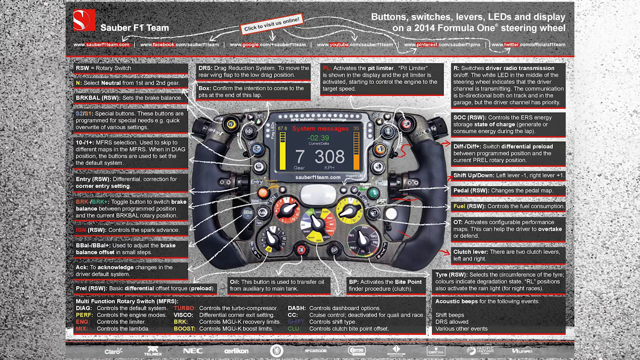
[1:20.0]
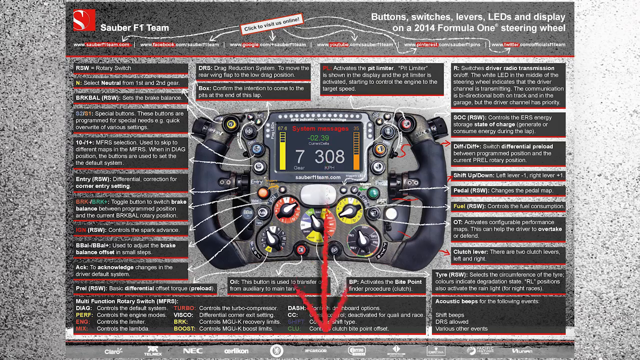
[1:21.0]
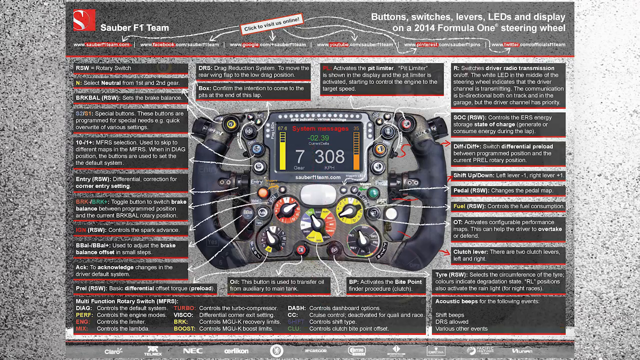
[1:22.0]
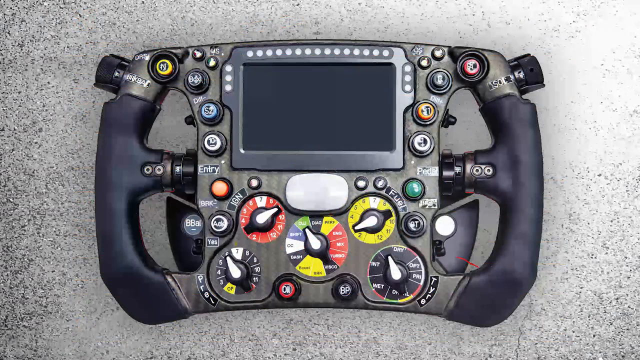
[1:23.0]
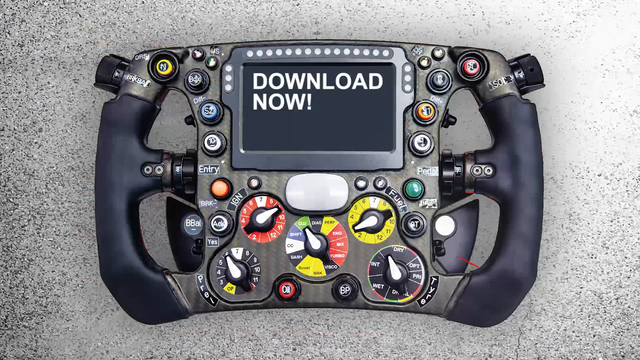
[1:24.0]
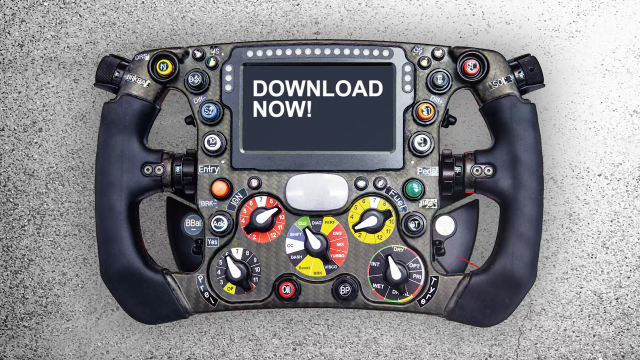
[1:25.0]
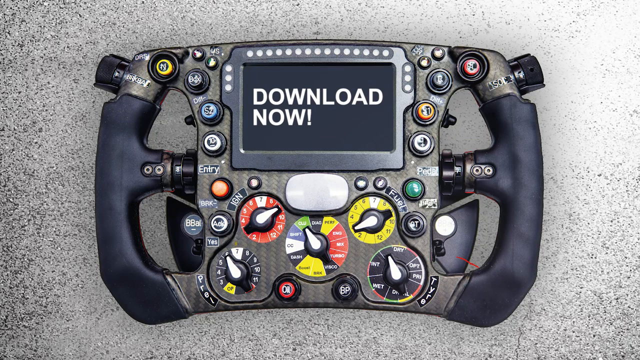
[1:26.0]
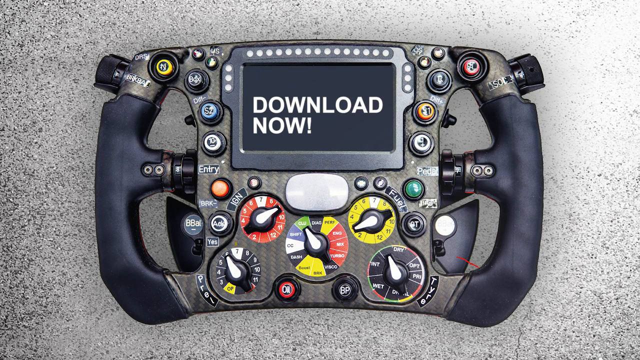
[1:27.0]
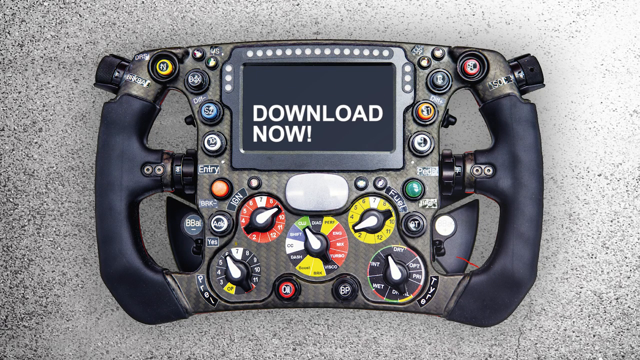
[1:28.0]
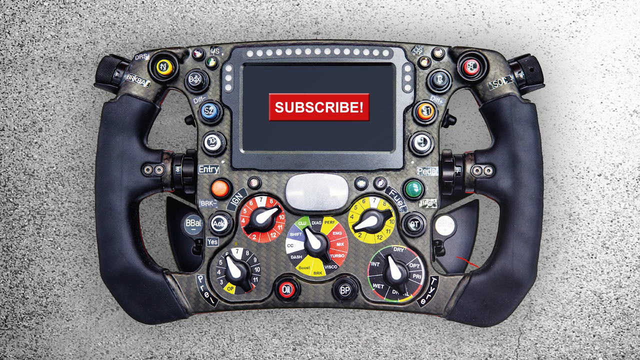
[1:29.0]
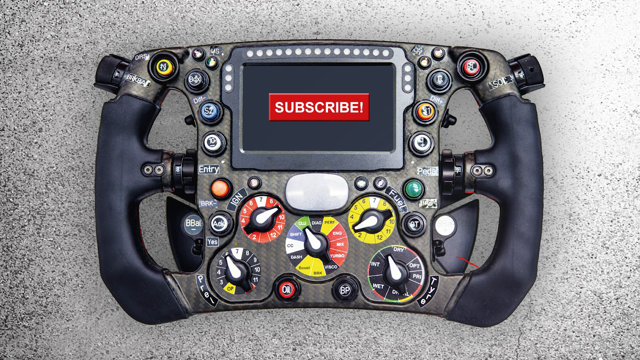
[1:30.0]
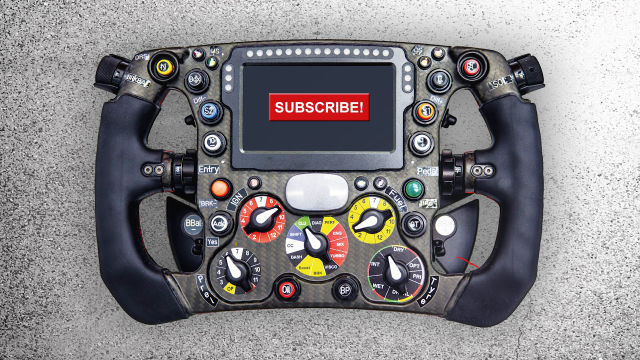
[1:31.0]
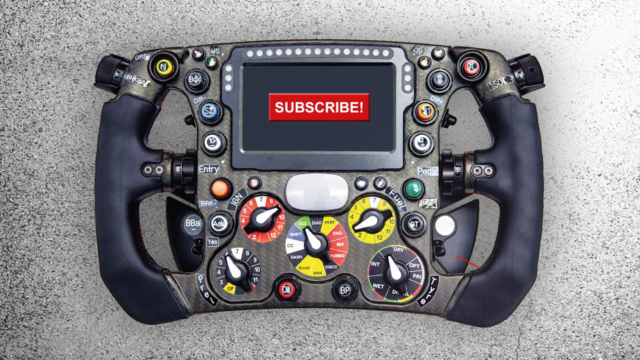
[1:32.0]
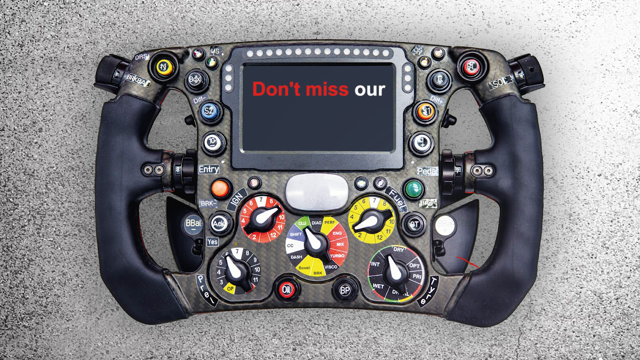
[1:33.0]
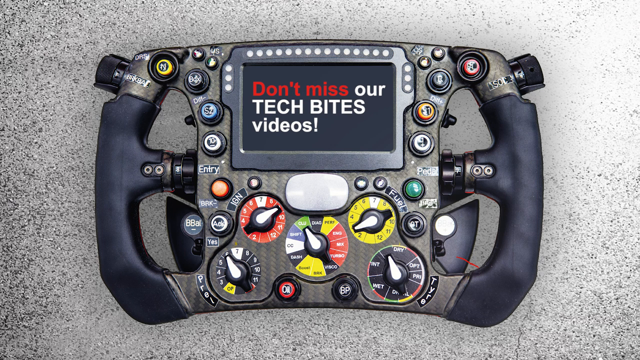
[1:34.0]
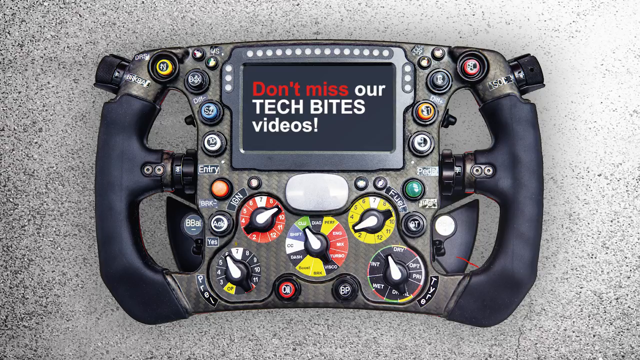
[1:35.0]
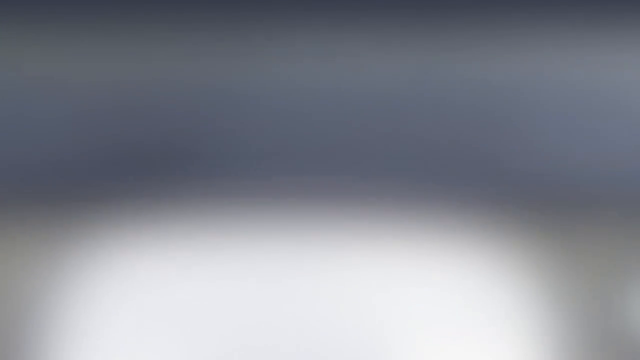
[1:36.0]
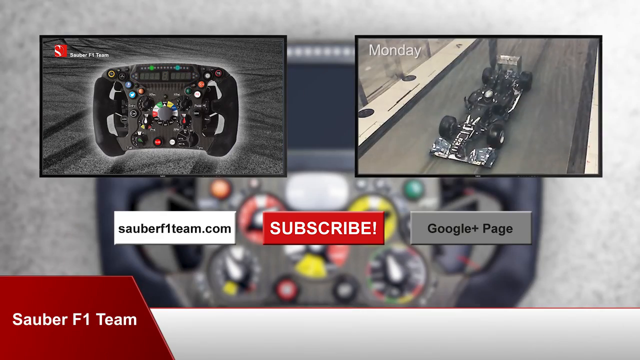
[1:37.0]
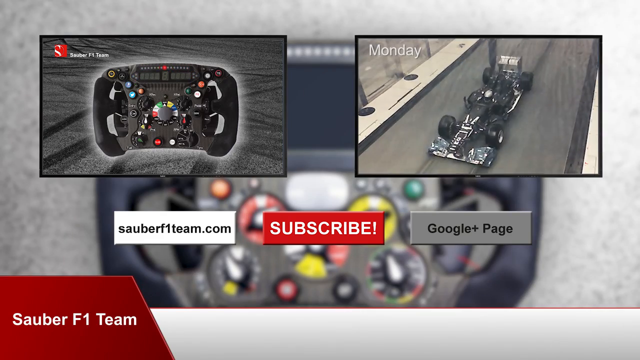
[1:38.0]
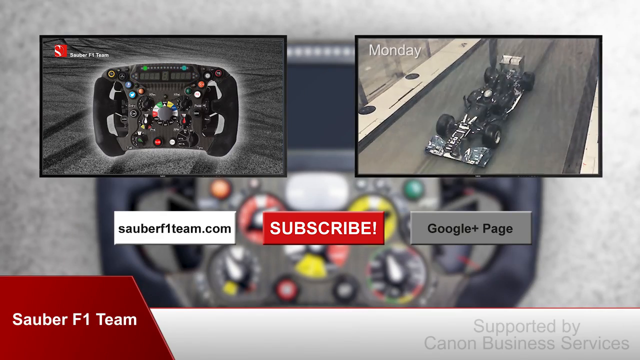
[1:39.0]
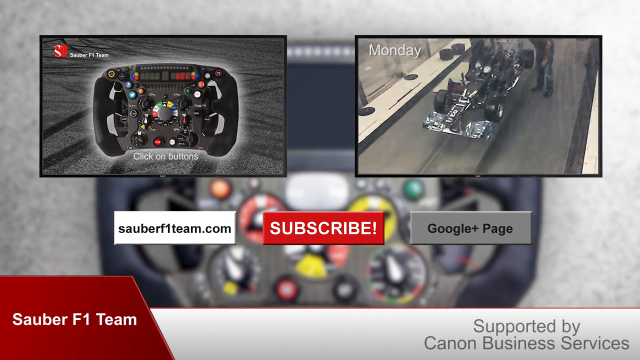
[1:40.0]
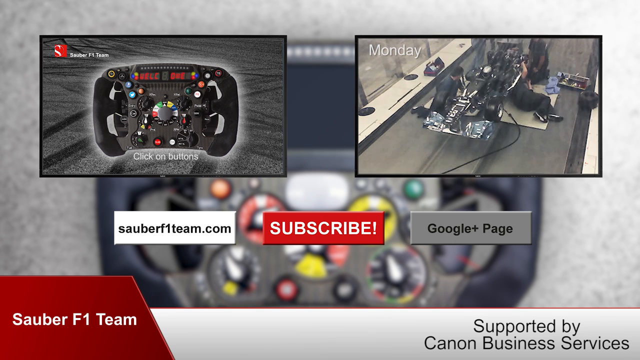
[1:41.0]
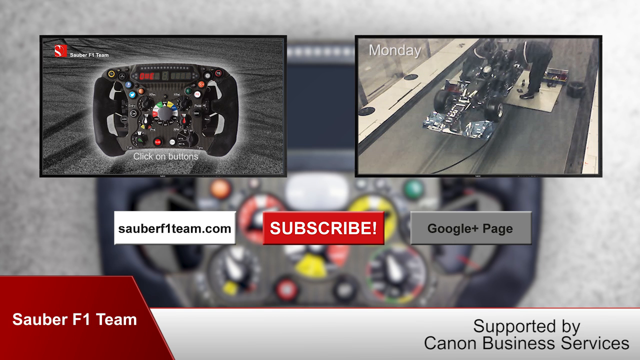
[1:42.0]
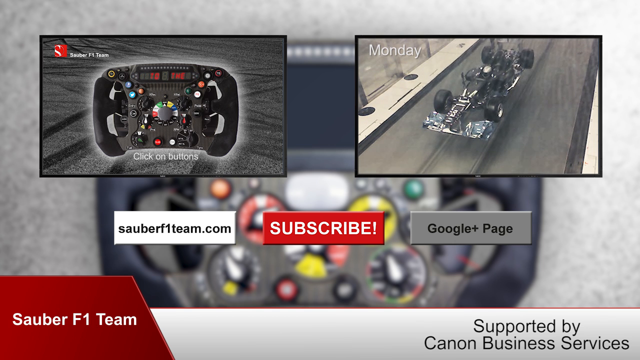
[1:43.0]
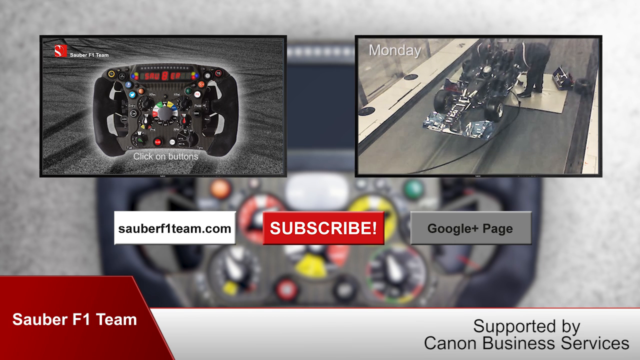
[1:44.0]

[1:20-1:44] The arrow points up and then down, up and then down. The video then flashes to a picture of the controller again, which looks like it is on concrete or maybe gray carpeting, or possibly a photoshopped background. It has handles on the sides for holding, multiple buttons to press and many toggles. Its small screen reads "download now" in white font, and the text bounces up and down. The word "subscribe" then appears on the screen as a red subscribe button like those on YouTube, followed by the text "don't miss our tech bites with videos". The image blurs out, and a screen shows "SauberF1Team.com", a subscribe button and a Google Plus page button, along with new videos, including this video. In the top right is the word "Monday", on what looks like a race car game.